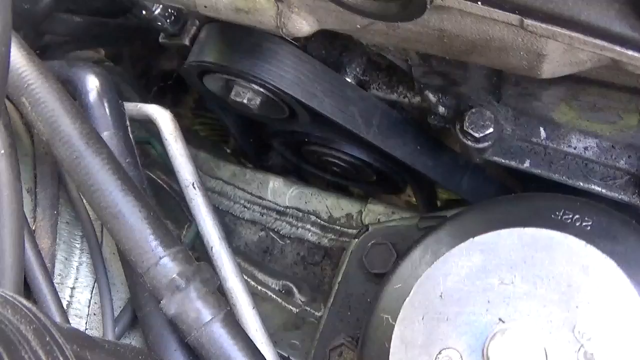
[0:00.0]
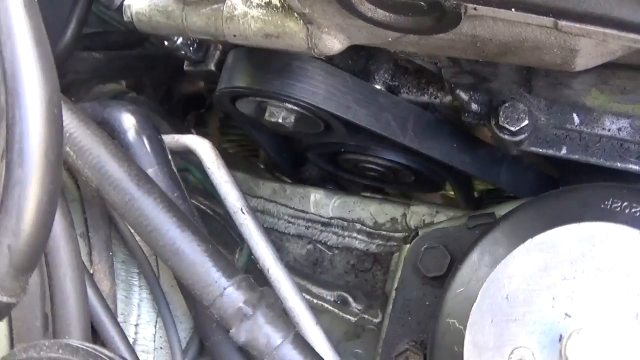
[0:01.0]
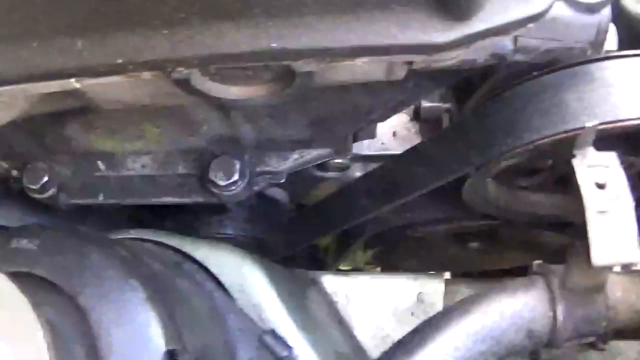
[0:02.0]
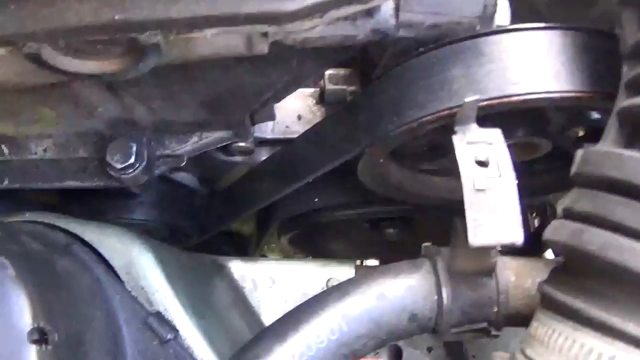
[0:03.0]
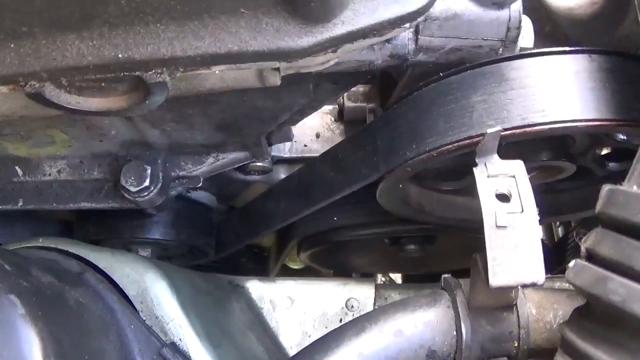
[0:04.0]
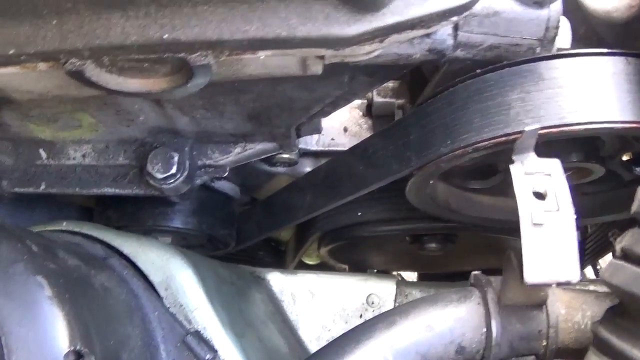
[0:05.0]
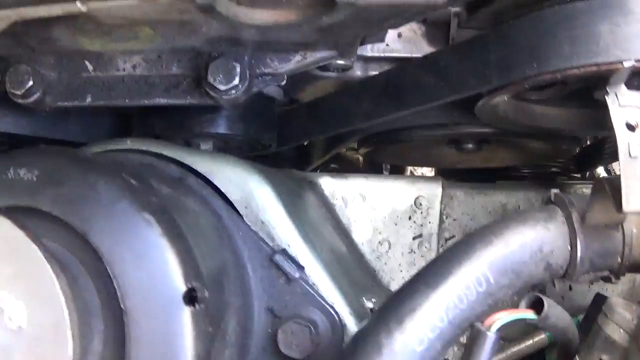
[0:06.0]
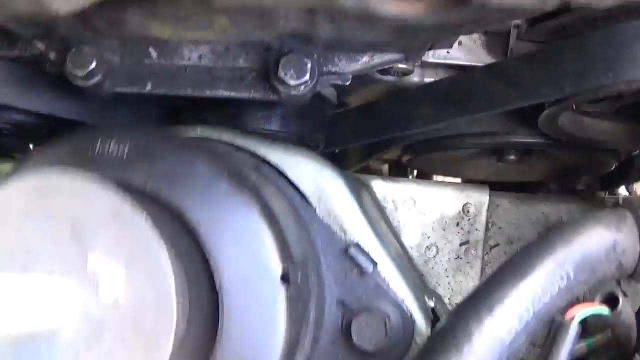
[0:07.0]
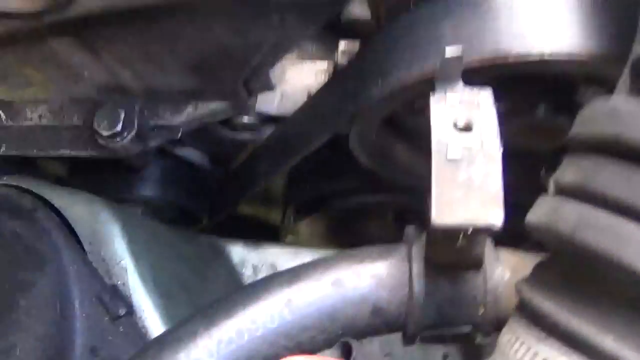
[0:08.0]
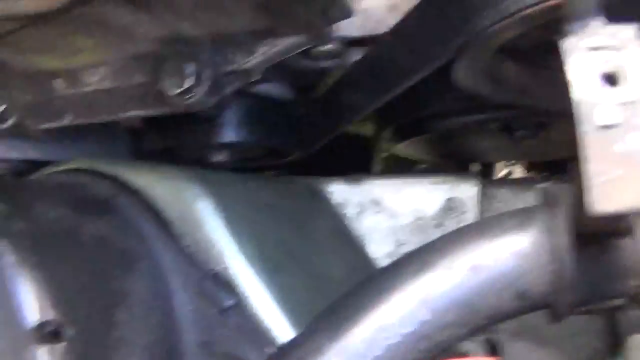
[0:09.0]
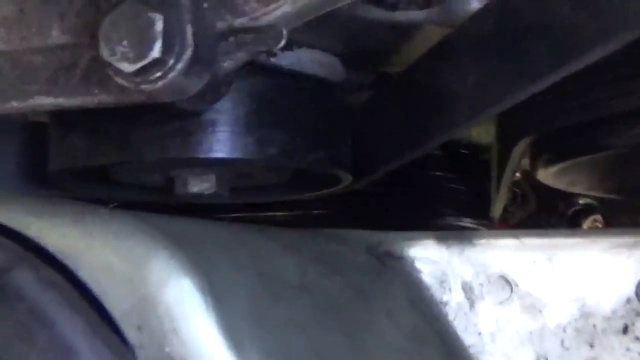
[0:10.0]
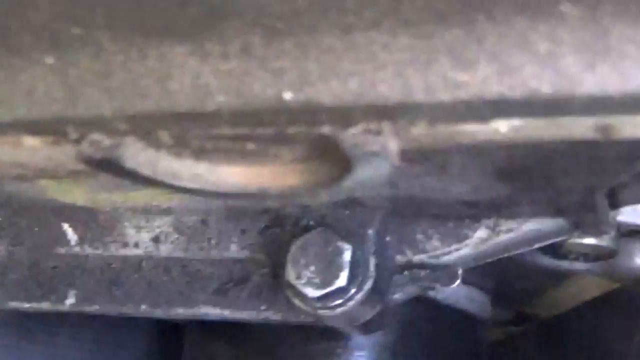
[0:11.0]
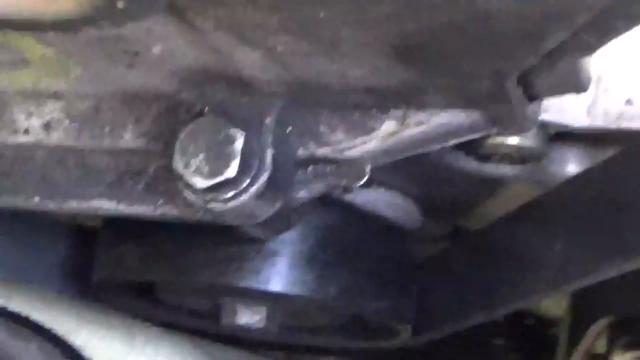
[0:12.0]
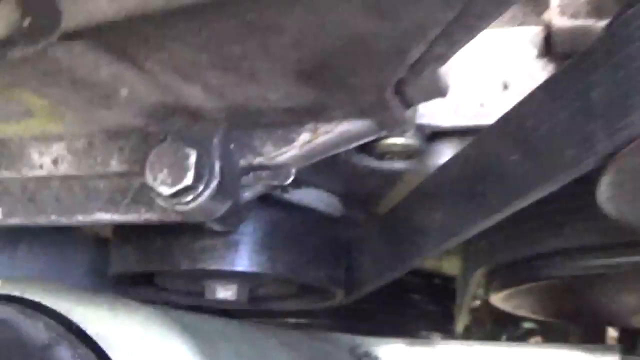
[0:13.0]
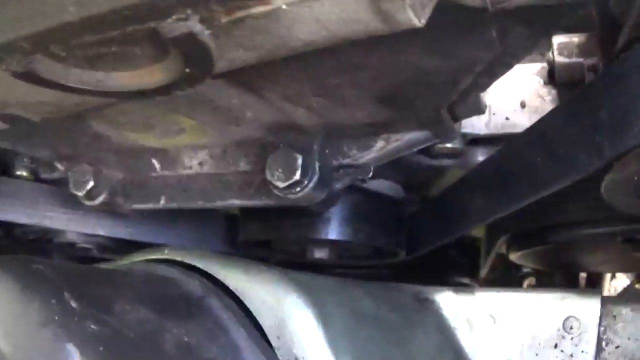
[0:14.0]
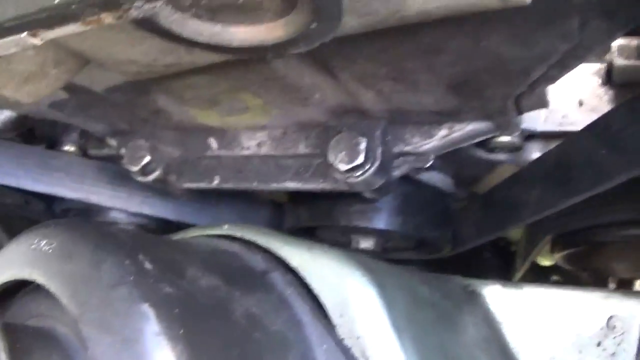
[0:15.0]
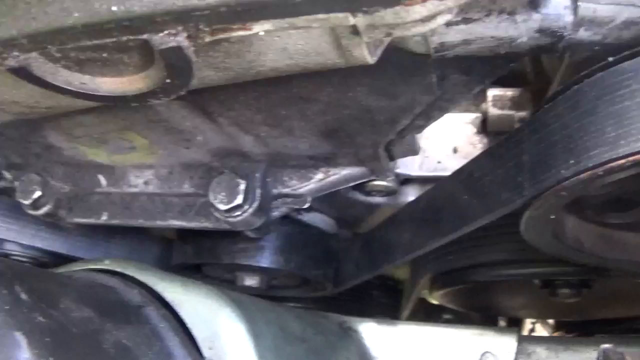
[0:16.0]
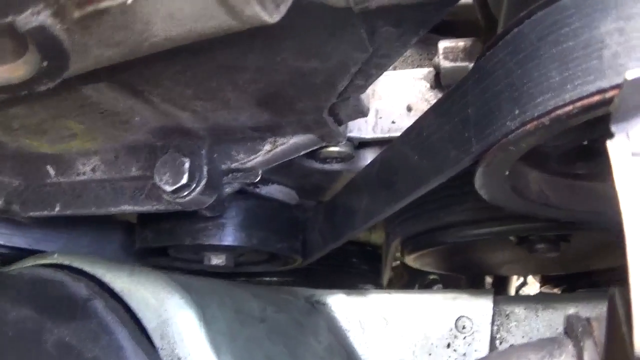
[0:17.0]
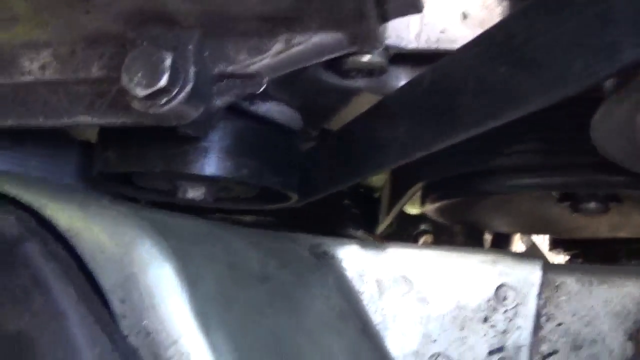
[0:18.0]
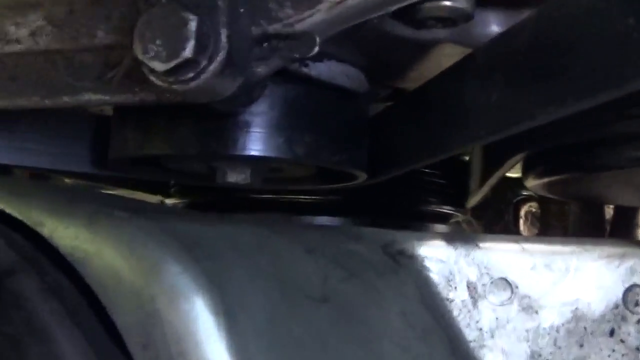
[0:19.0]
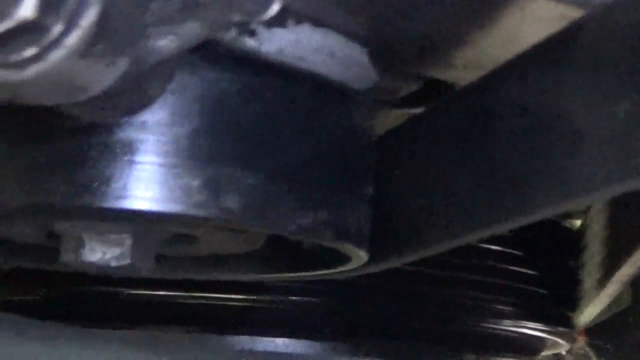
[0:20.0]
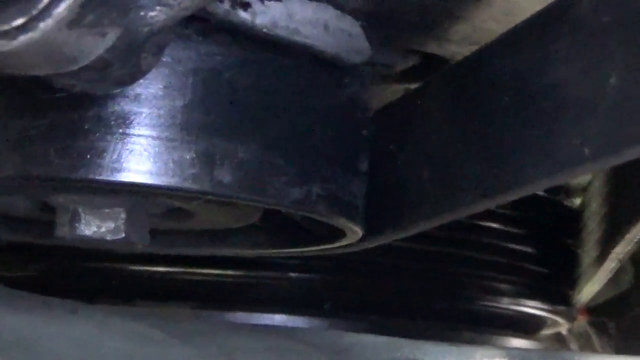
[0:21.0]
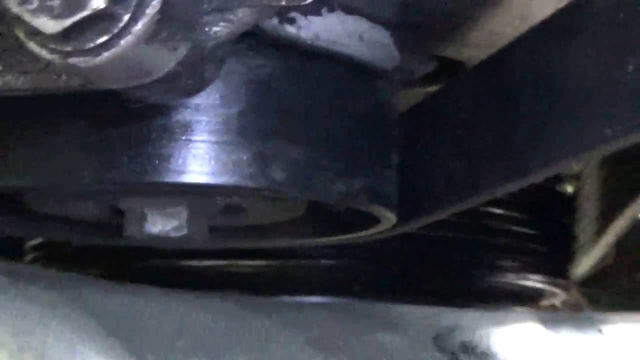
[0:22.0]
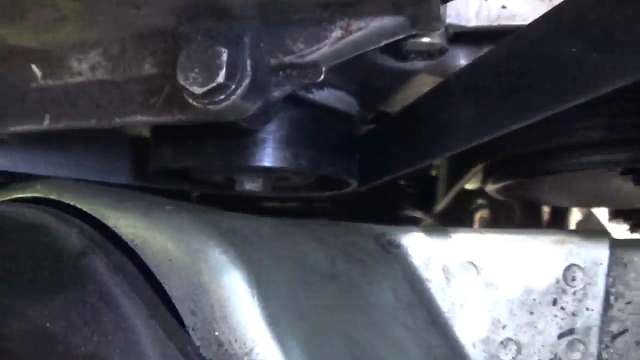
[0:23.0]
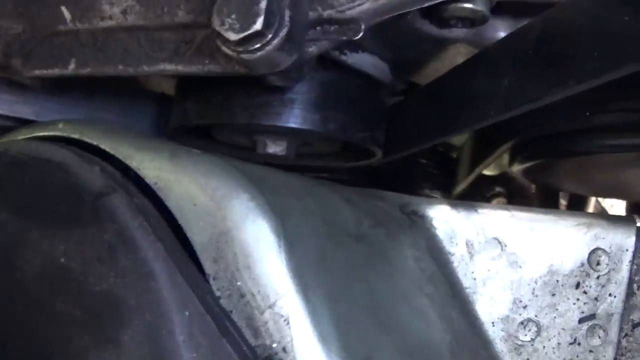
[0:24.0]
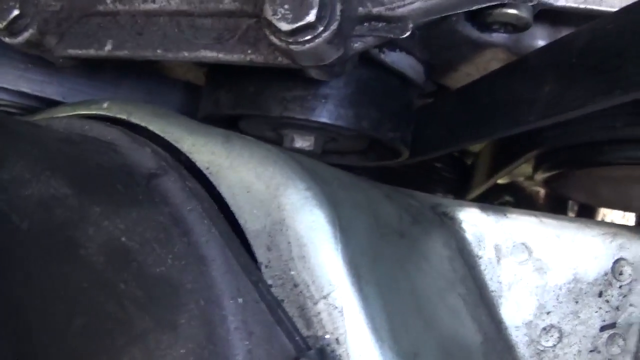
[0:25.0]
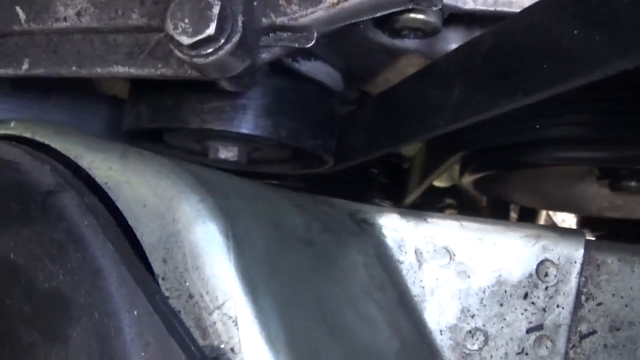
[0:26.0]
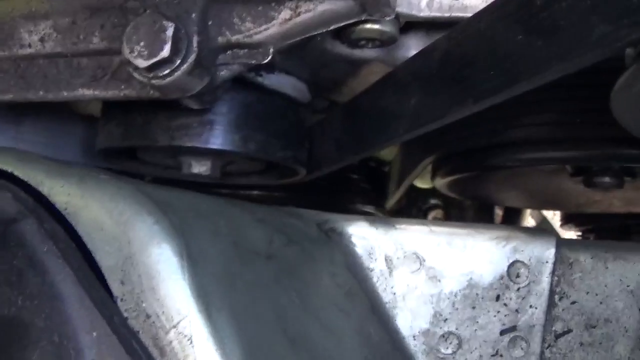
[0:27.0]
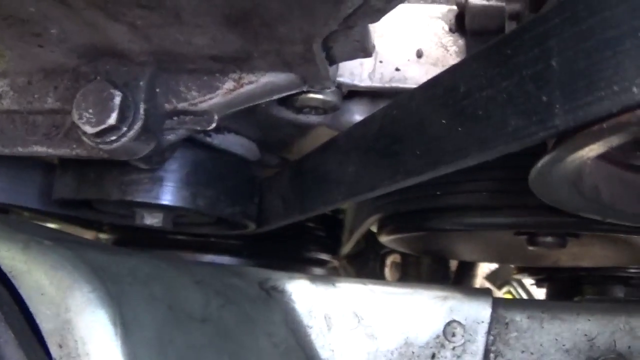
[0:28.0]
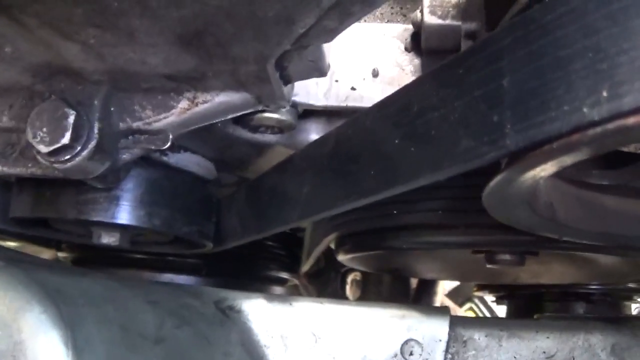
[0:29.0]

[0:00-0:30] An overhead shot shows an engine, presumably from some type of automobile, with metal pipes, a belt, various bolts, various pieces of metal plating, and tubing visible. The overhead shot moves from left to right. The camera is kind of shaky, as if it is held by hand. The lens zooms in on a roller component, zooms in even further, and then zooms back out.